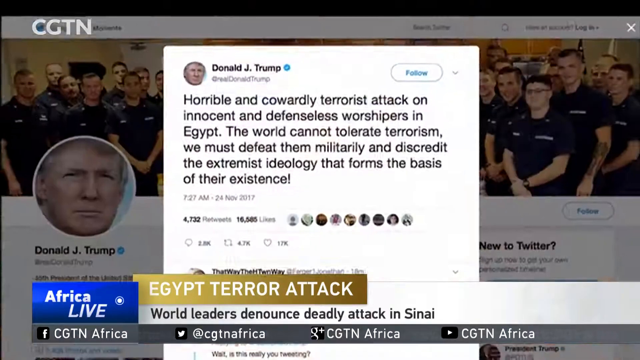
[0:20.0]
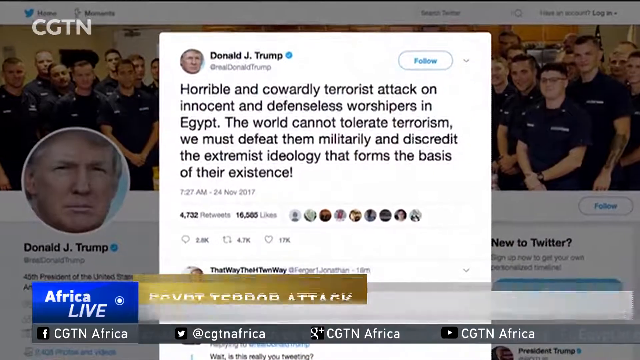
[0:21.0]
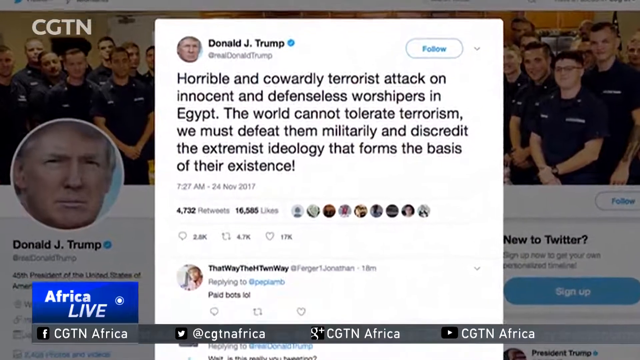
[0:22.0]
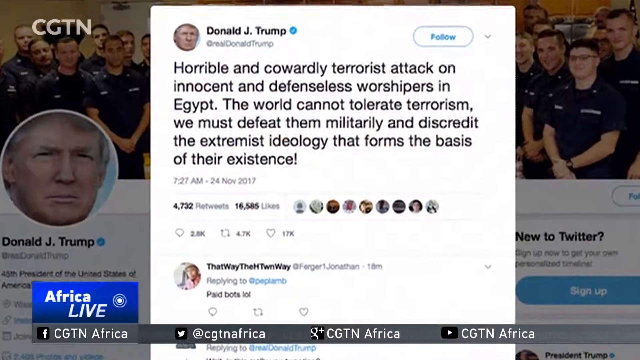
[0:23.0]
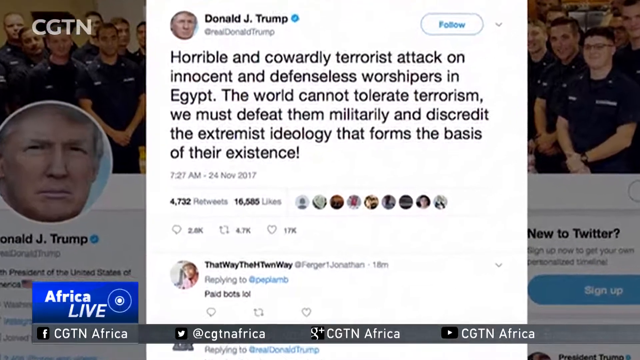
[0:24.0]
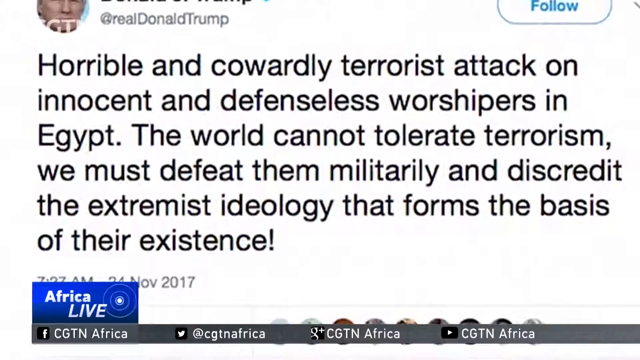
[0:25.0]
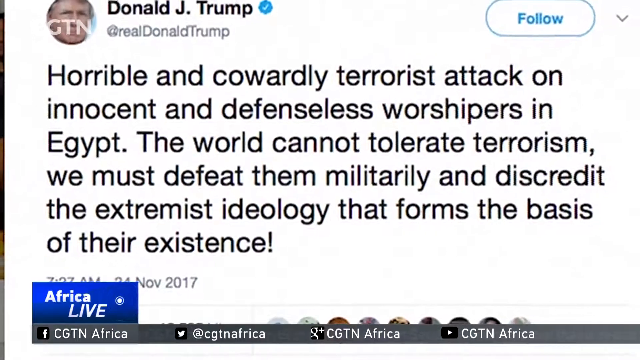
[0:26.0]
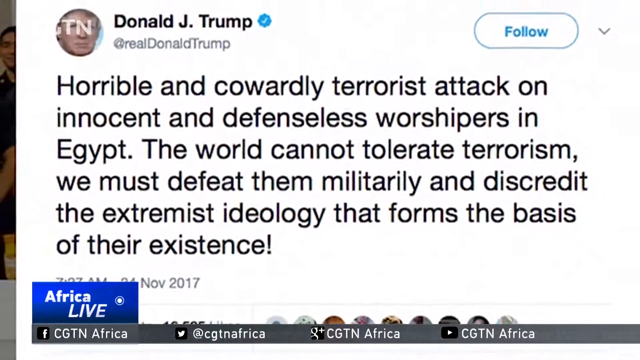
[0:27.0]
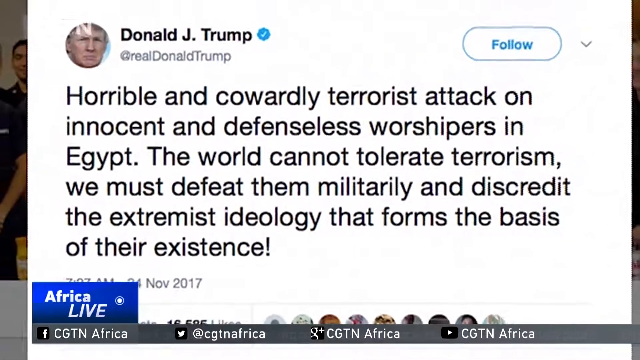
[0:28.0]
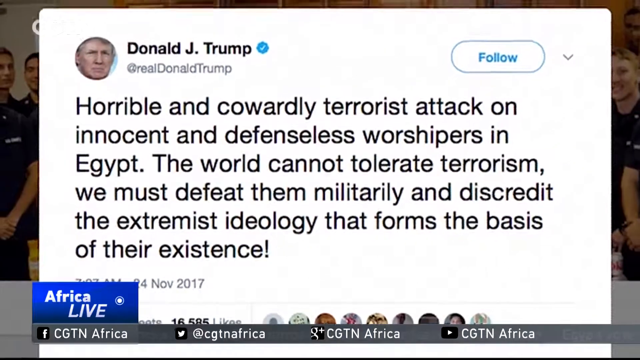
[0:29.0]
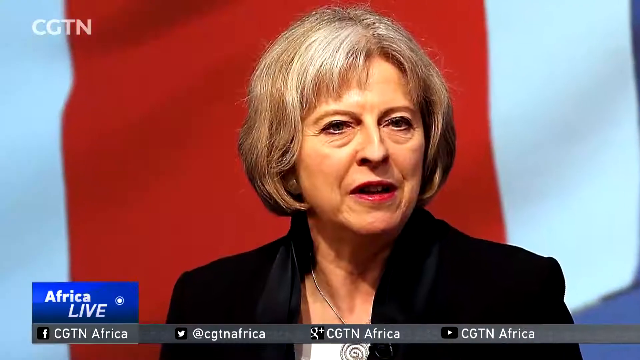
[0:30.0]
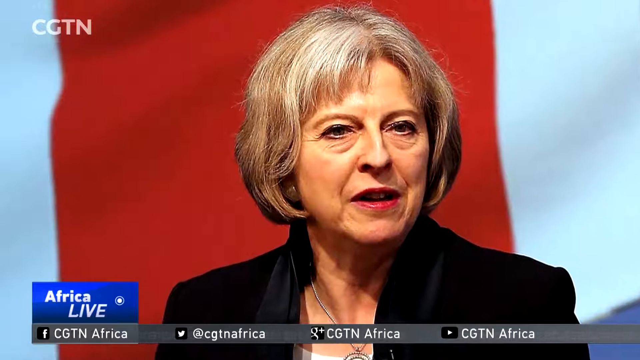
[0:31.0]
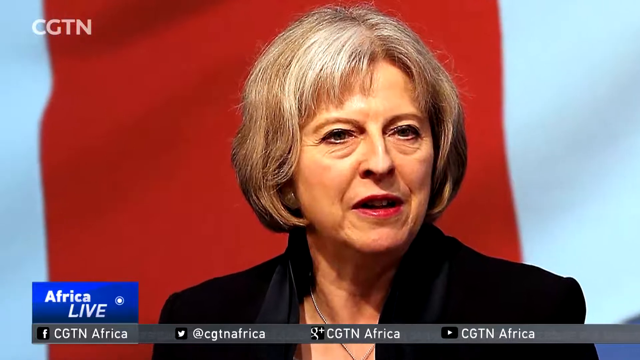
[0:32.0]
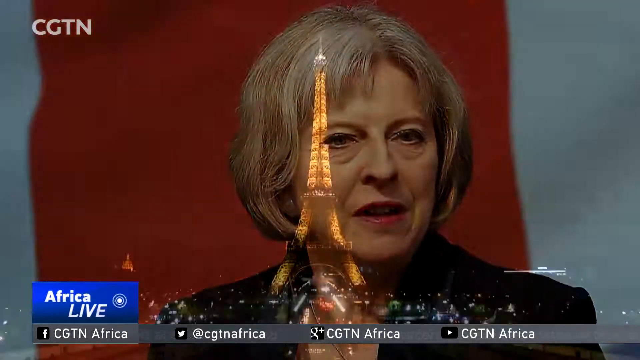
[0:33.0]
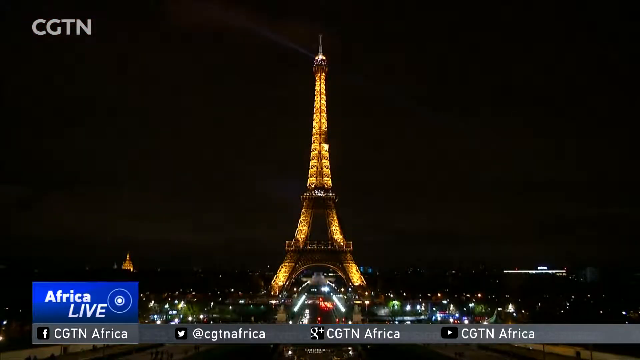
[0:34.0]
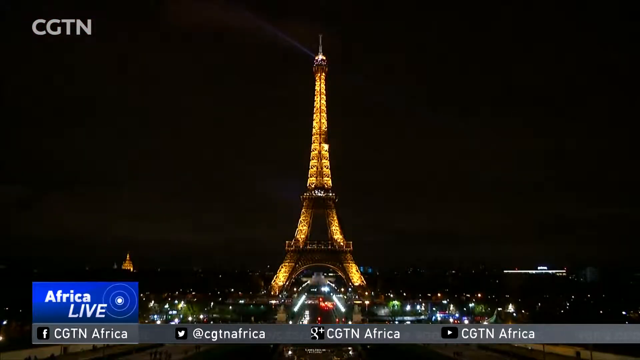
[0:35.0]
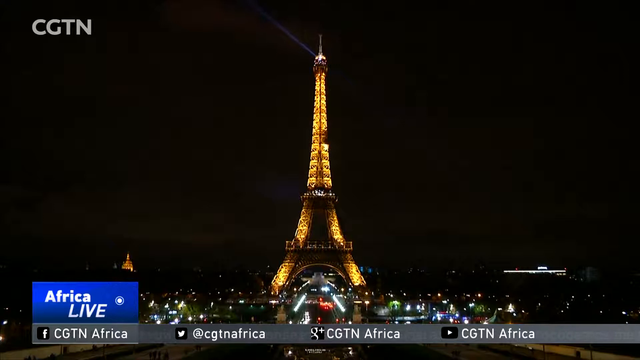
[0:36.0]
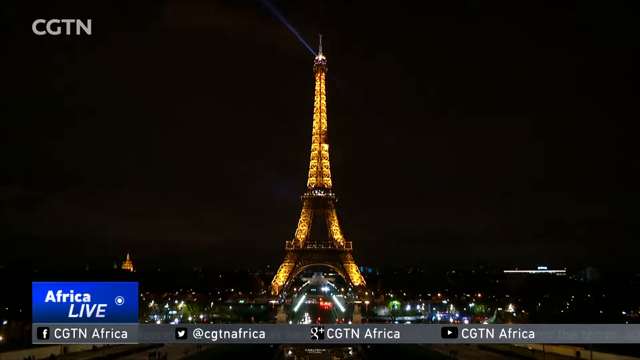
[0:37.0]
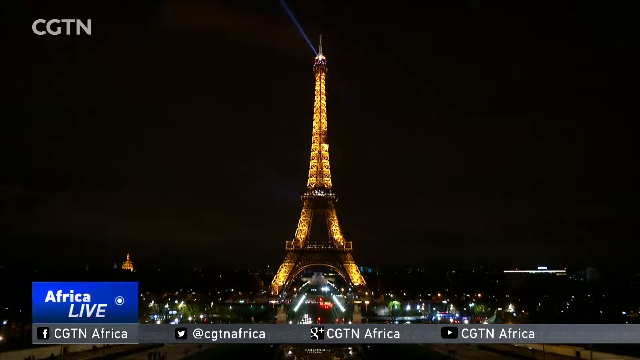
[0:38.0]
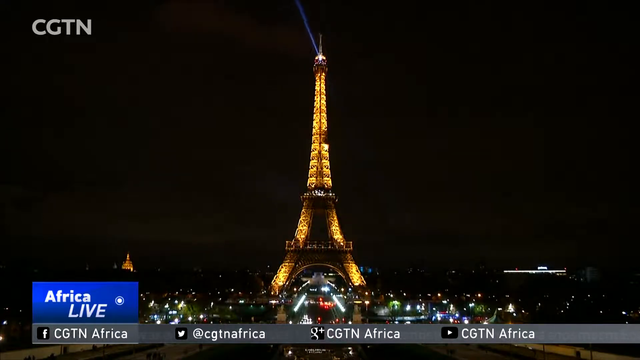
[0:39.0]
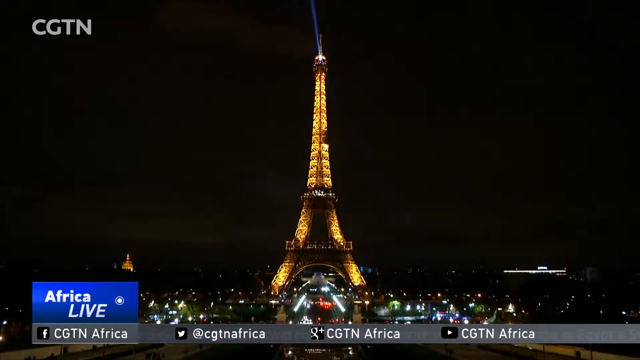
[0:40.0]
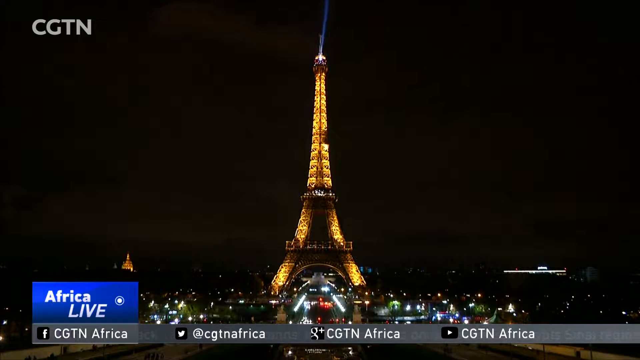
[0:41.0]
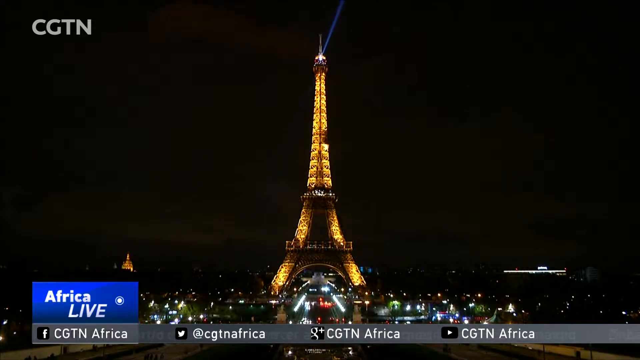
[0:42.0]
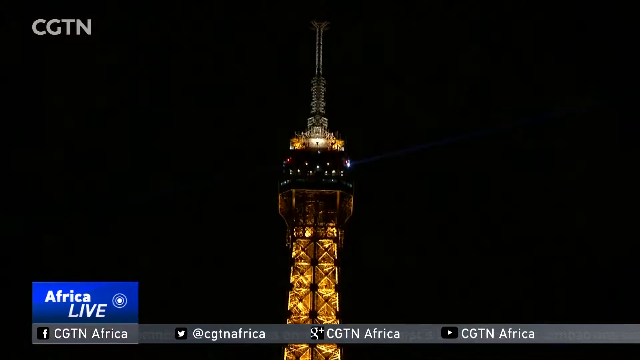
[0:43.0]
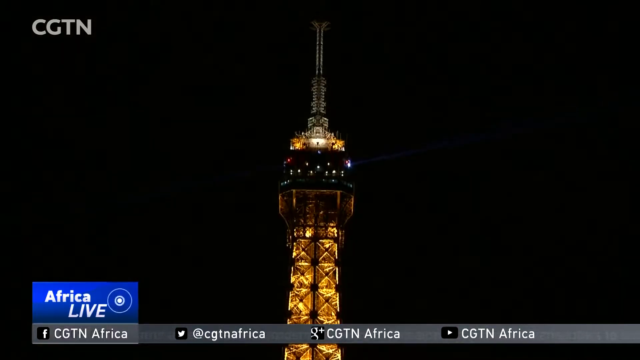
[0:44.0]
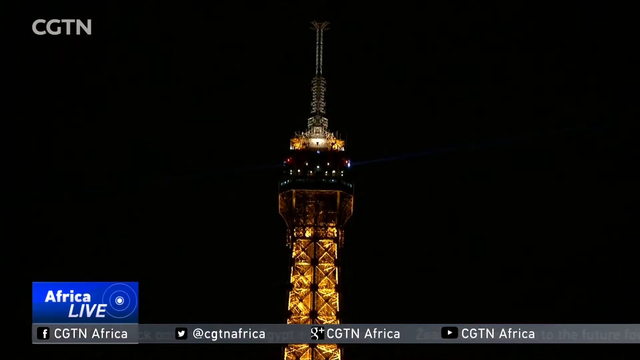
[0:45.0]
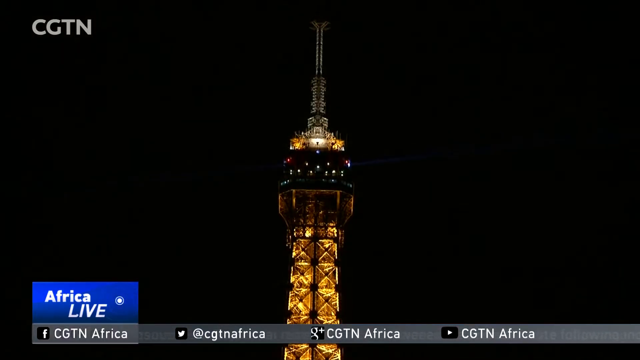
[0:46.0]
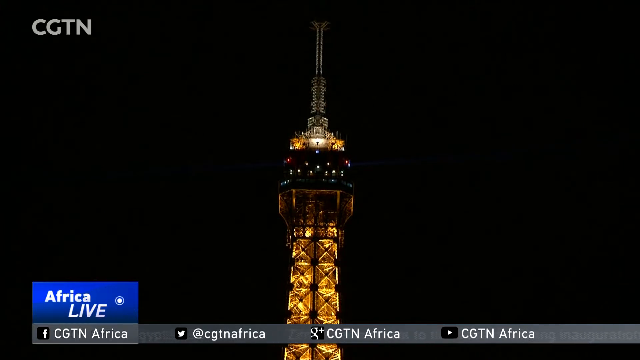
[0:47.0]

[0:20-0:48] The video begins with the black news reader. Then a social media post from Donald Trump on Twitter appears, condemning the terrorist attack in Sinai and the extremist ideology; the post seems to be set in front of an image of first responders on his page, and it is apparently an older post. Next comes a picture of Theresa May, former British Prime Minister, followed by footage of the Eiffel Tower in Paris, which is a moving video rather than a still image, with lights going round at the top of the tower. The CGTN Africa logo appears again in the bottom left.